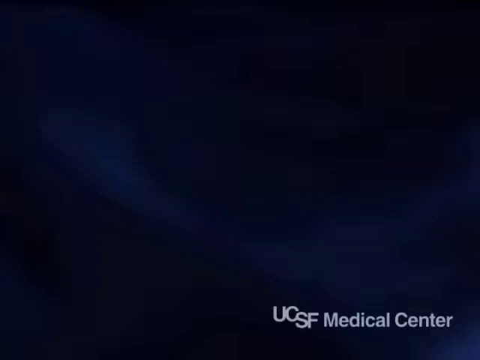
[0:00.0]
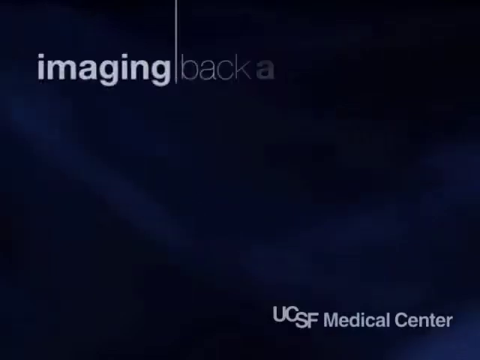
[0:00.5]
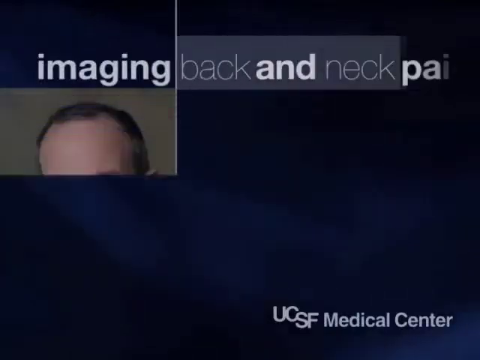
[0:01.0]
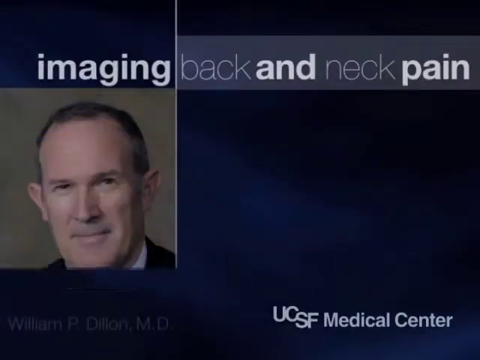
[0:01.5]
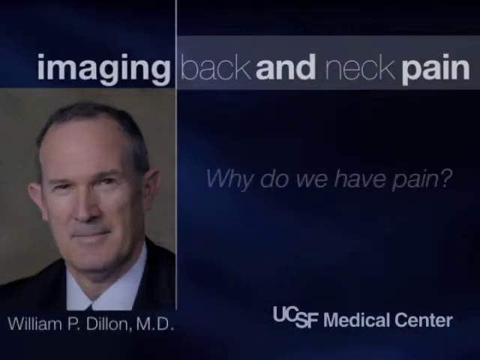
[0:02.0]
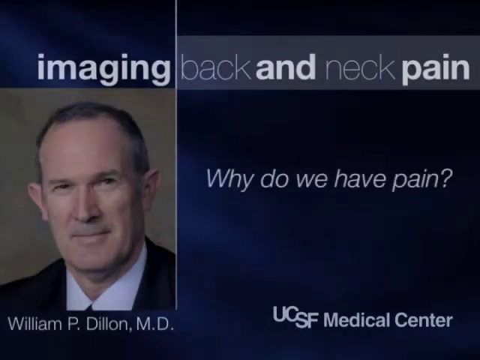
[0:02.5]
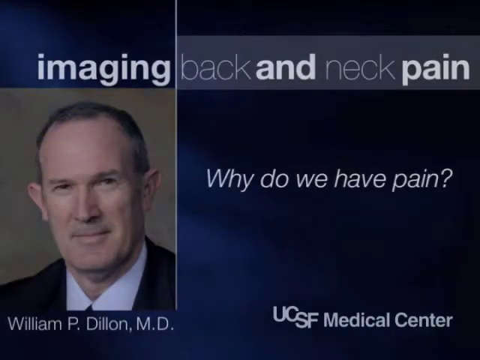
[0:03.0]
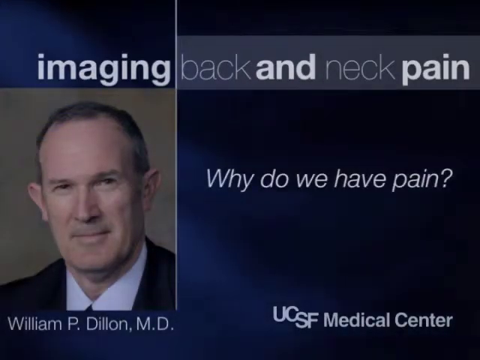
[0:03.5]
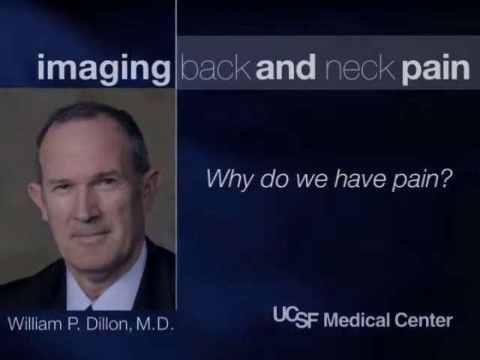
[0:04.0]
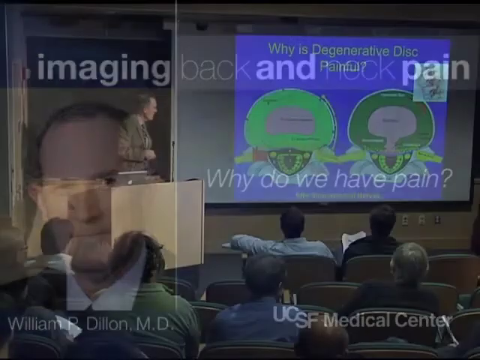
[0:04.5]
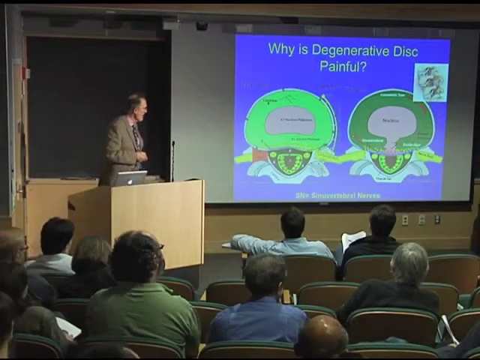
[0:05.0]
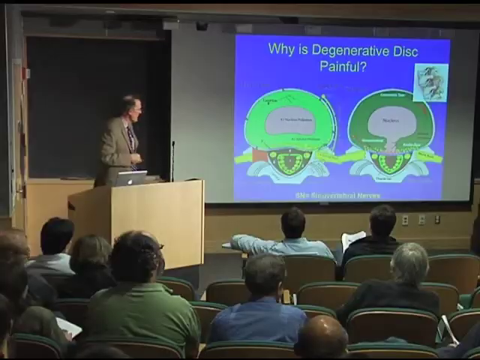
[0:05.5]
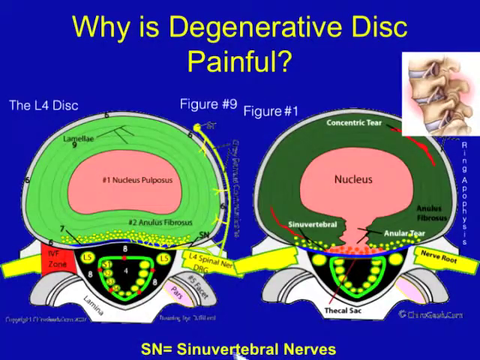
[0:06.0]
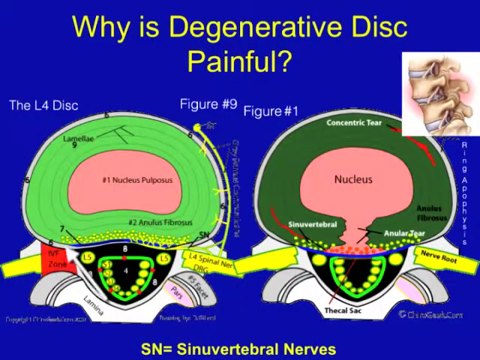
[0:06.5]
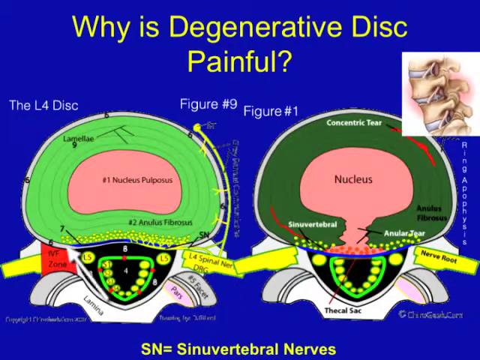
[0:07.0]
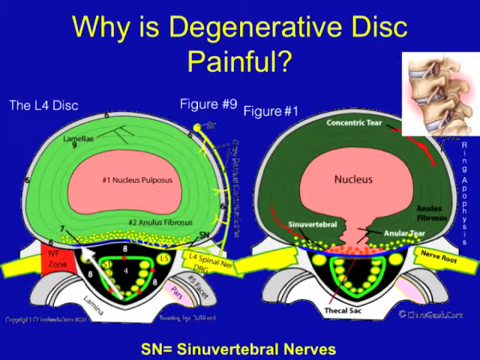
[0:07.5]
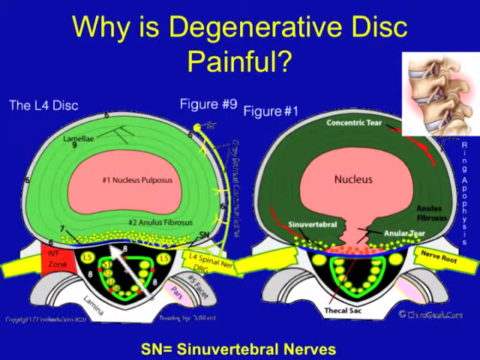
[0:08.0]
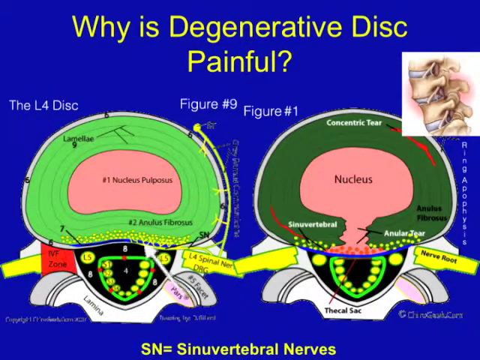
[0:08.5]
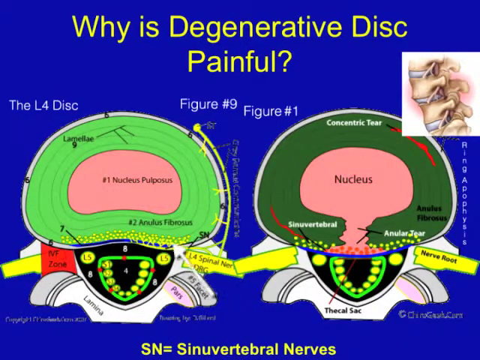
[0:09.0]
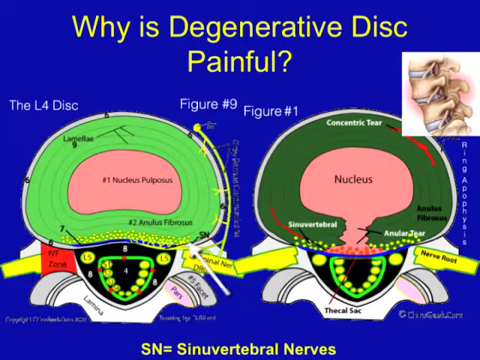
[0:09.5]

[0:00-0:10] The words "UCSF Medical Center" appear in the bottom right. A title, "imaging back and neck pain," comes up in small letters: "imaging" is in white, set on a lighter blue band with a darker blue background, "neck" is in lighter blue and "pain" is in white. A gentleman whose last name is Dillon, M.D., takes up one fourth of the screen on the left. He has very prominent ears, a slight smile, small beady eyes and short hair that is receding at the hairline, and he wears a white shirt and a darker colored suit jacket. The words "Why do we have pain?" appear. The gentleman is talking to a crowd and pointing up to the screen. Pictures of discs come up, and an arrow moves around over the first set of pictures, which shows two distinct drawings of a disc.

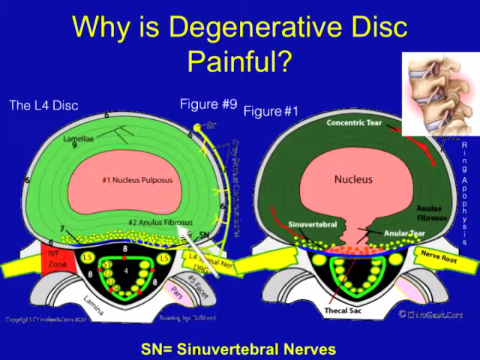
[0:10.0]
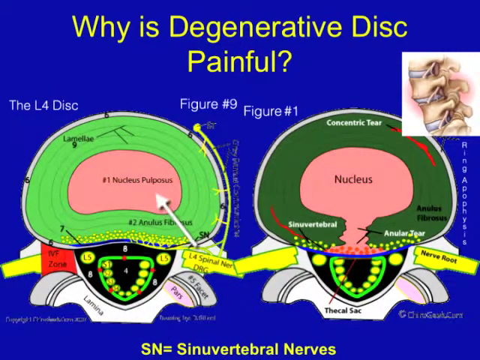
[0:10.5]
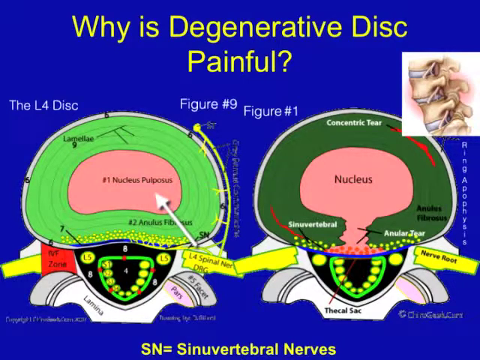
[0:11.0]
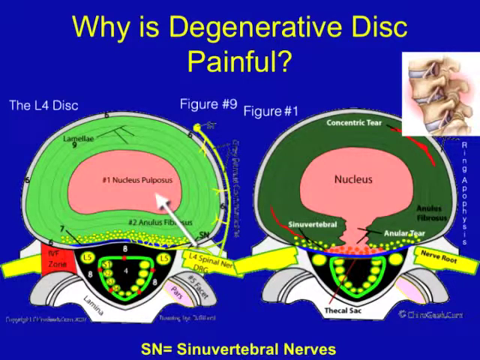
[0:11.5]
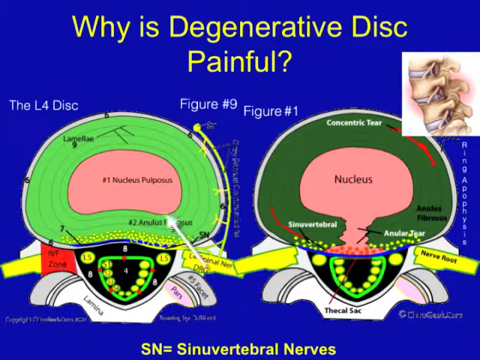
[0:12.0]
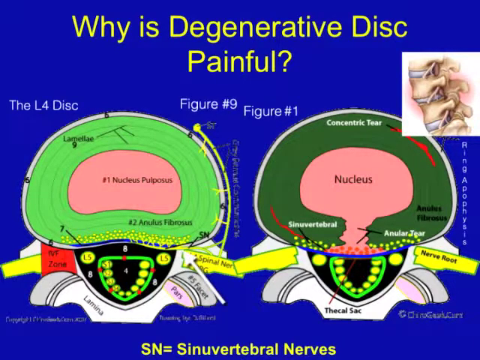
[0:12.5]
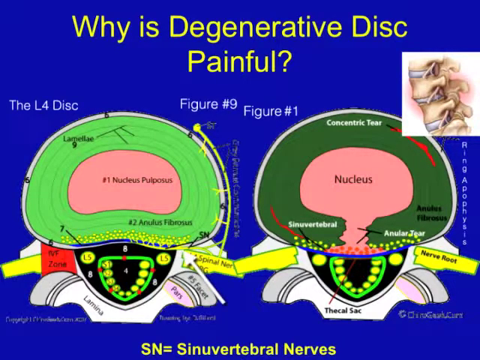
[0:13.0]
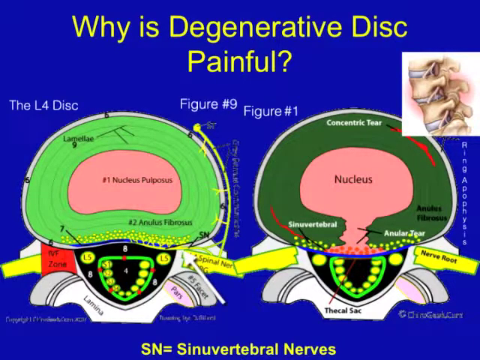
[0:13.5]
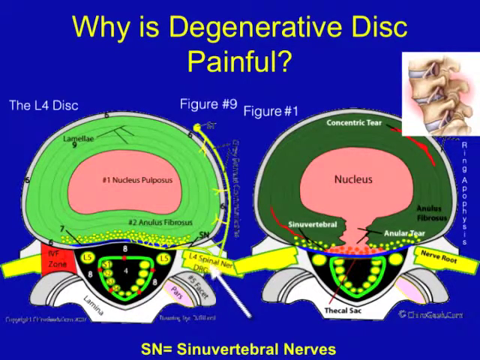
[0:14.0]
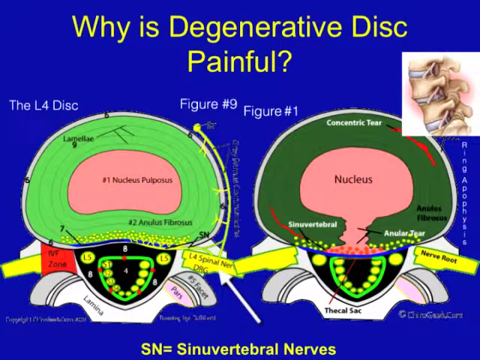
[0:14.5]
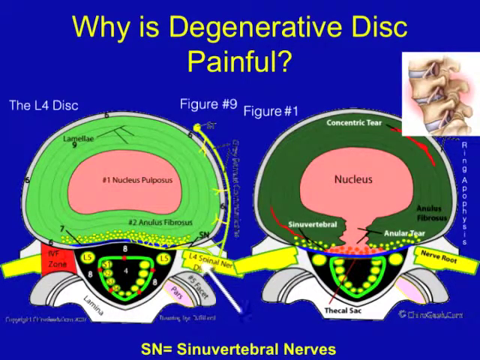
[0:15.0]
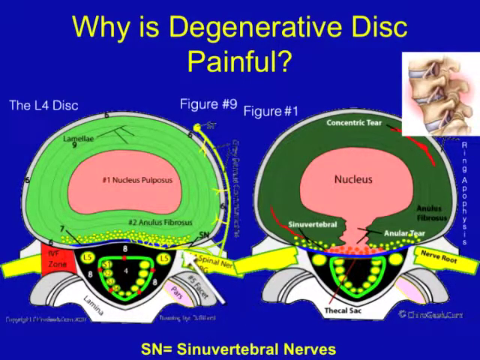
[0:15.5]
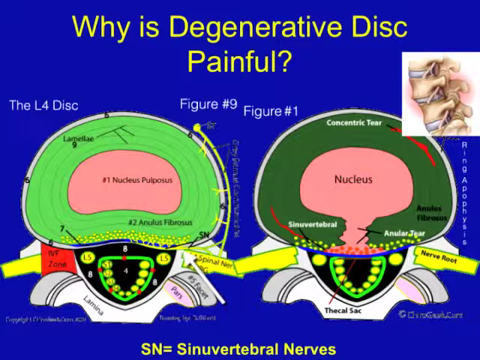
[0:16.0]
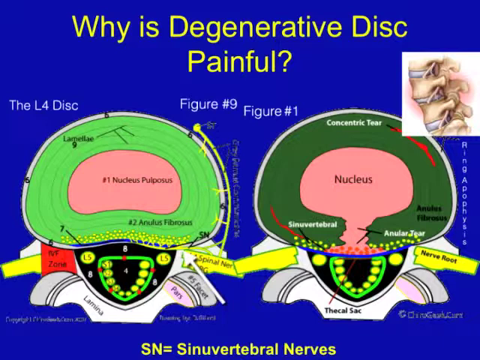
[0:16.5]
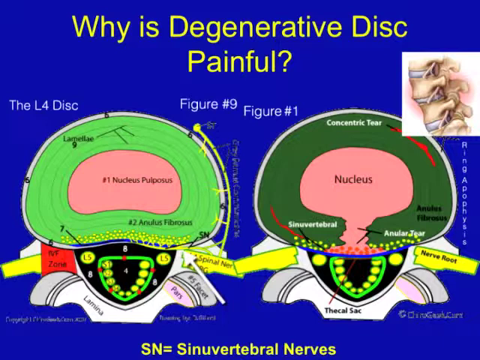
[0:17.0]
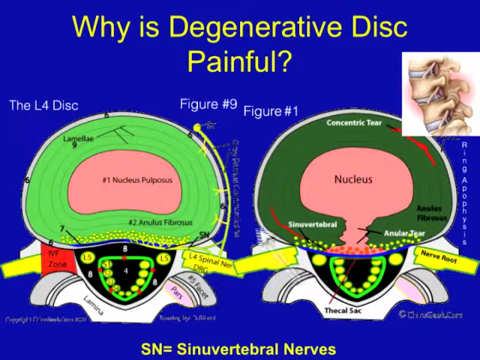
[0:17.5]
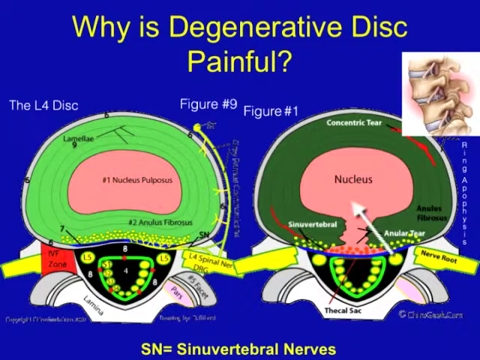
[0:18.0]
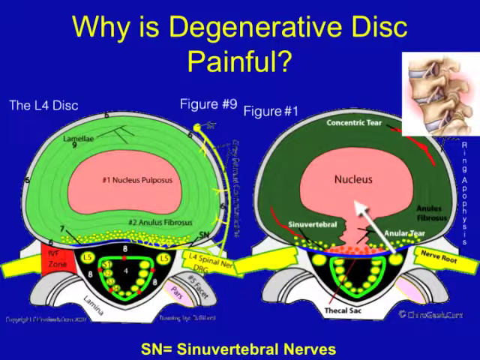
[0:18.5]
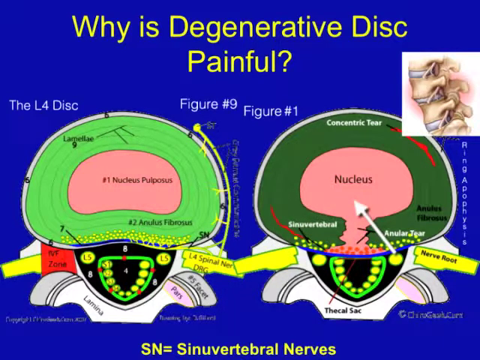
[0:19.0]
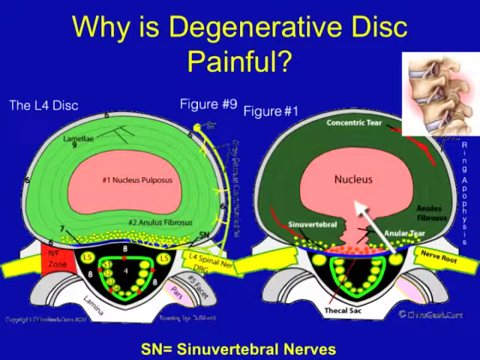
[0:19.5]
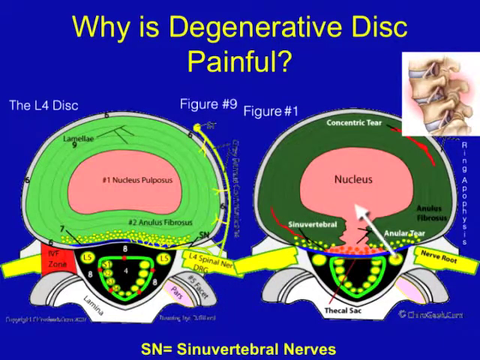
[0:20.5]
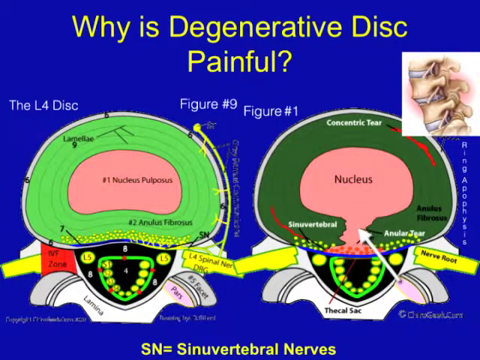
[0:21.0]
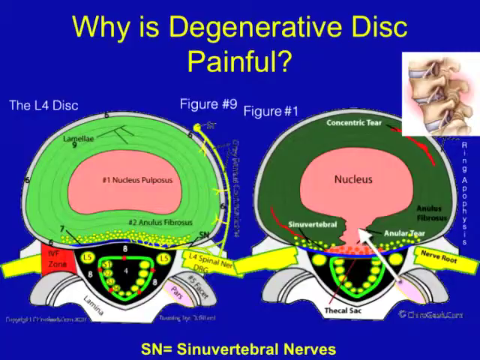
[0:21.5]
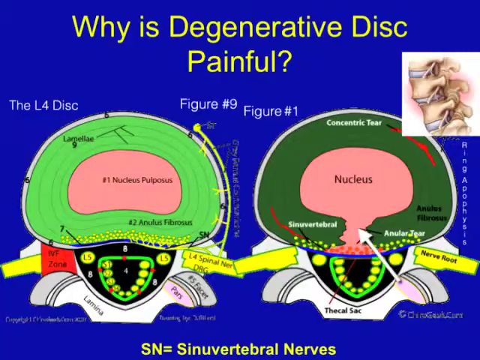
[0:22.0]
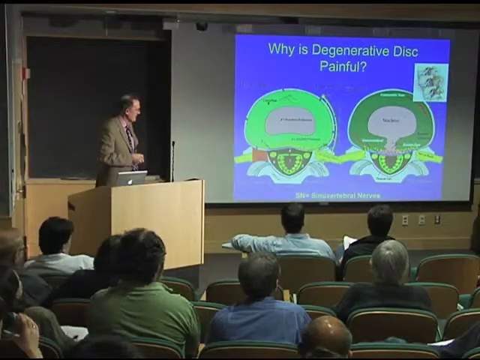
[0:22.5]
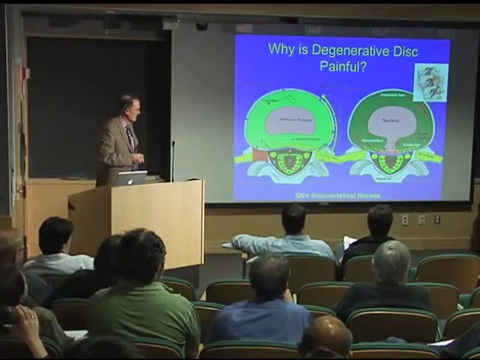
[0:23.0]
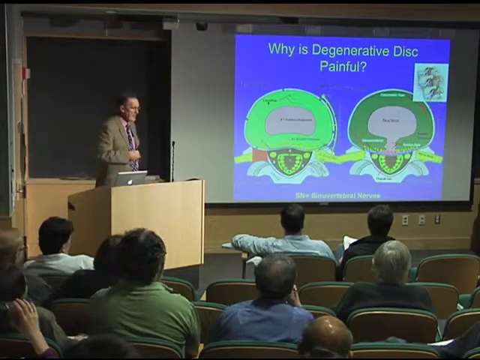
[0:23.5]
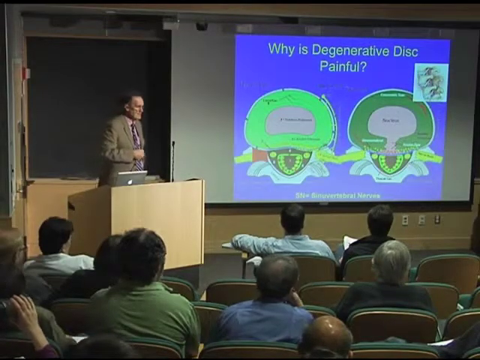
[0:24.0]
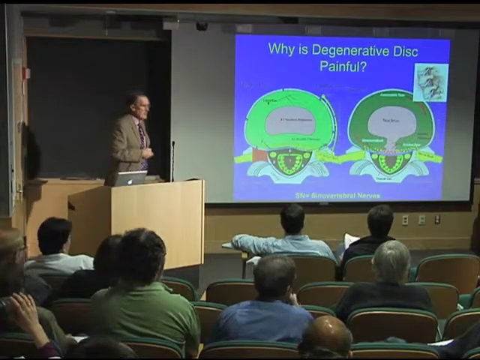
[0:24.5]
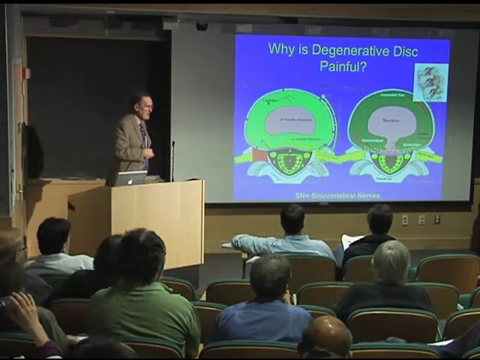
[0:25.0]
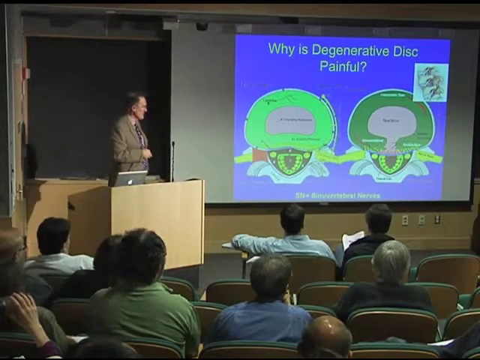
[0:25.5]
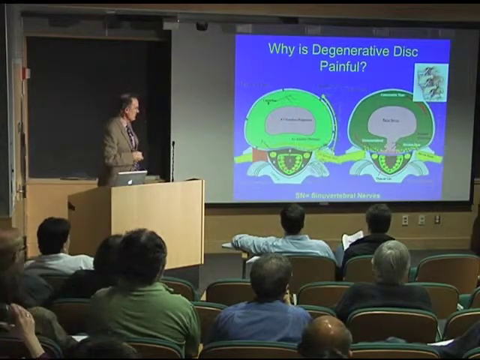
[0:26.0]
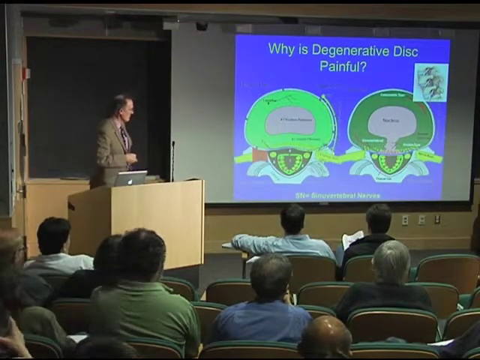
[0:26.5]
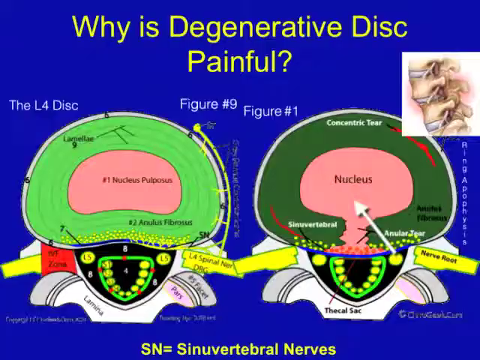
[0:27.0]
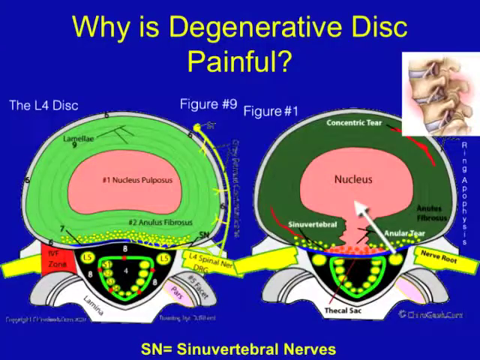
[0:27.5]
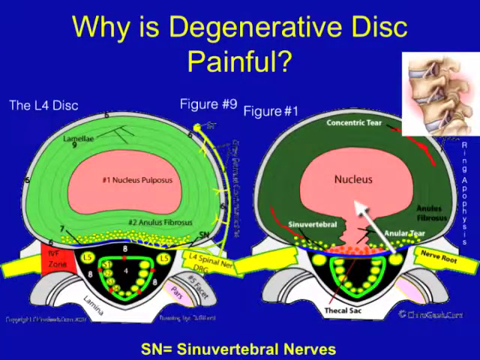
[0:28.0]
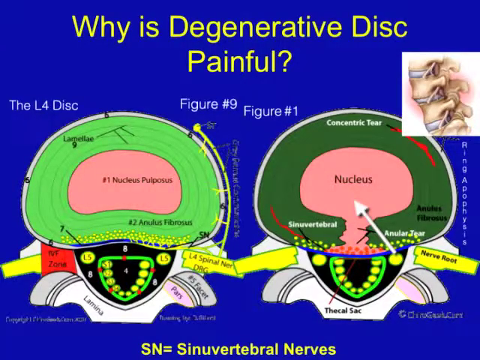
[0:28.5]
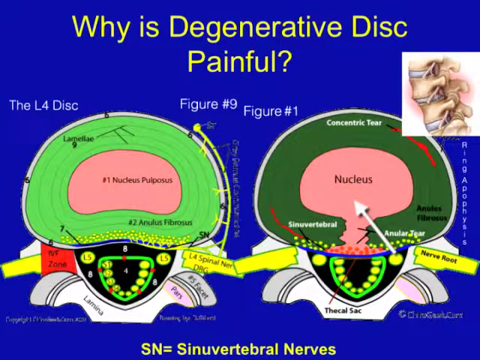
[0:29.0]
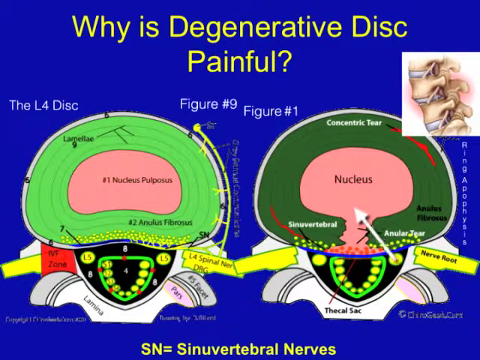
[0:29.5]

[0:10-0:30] The screen shows text mentioning a "degenerative disk" and several figures. One is a very colorful drawing of the L4 disk: a round, oblong object with green around the circular part and four circles around a light, darkish pink semi-circle, labeled with the number one. A white line runs around the outside of the whole screen, framing it. To the right, a yellow line comes down, and little lines go into the green. Below that is a darker area with many little dots. L5 appears on both sides, as if looking down onto the disk. On the right side is figure one, in a darker army green with a pink nucleus in the middle. Toward the middle, where a triangular disk is on black, there is a wider opening with some red dots across that area, and yellow dots run across the left and right sides of these. The drawing shows where the nerve root is.